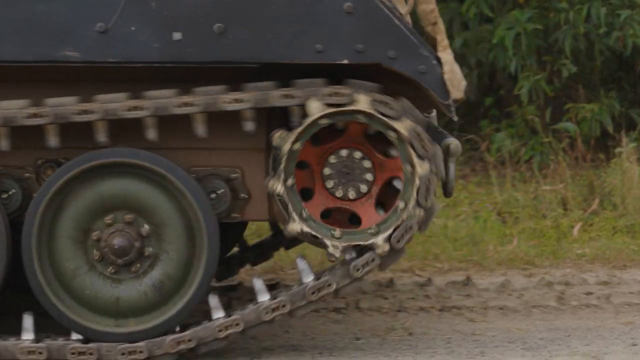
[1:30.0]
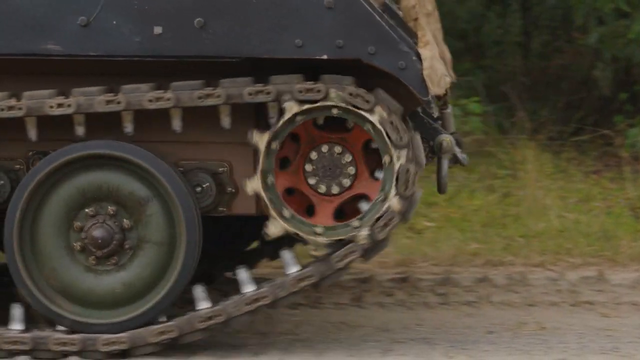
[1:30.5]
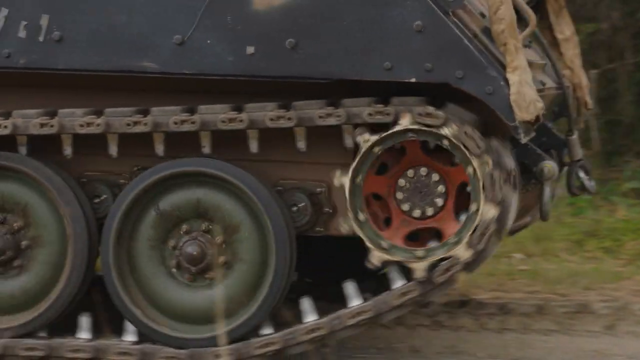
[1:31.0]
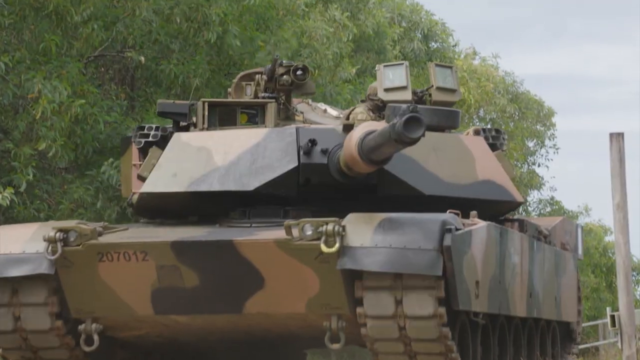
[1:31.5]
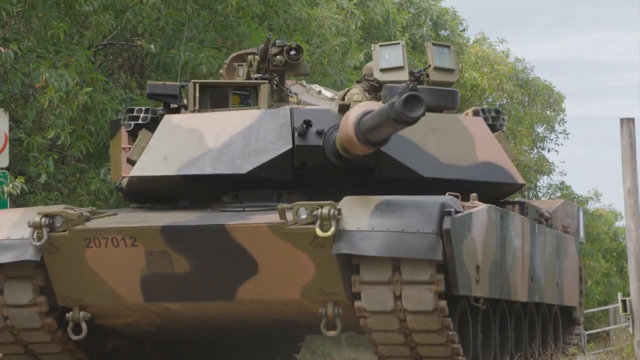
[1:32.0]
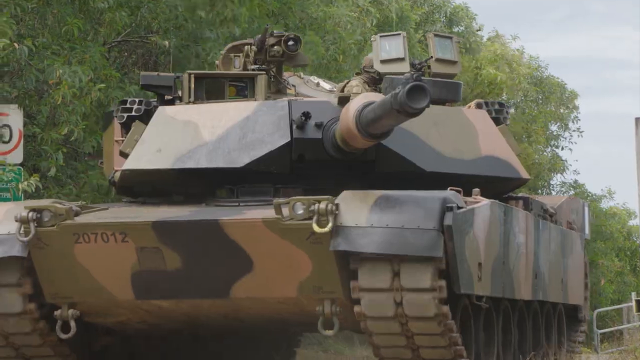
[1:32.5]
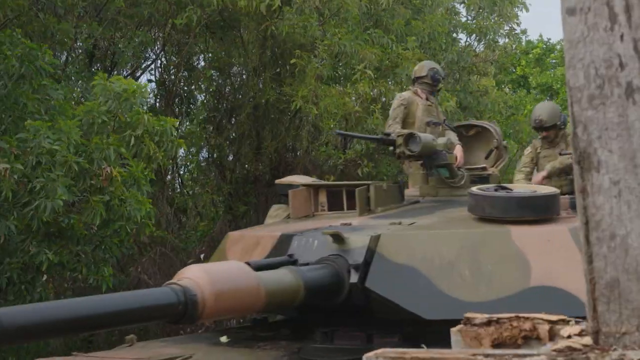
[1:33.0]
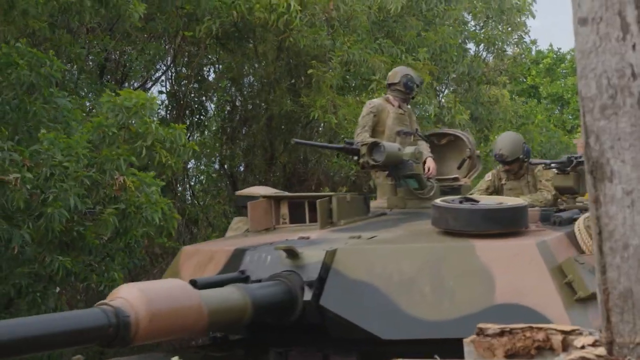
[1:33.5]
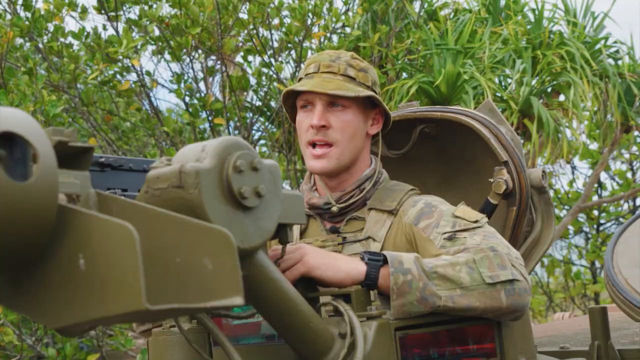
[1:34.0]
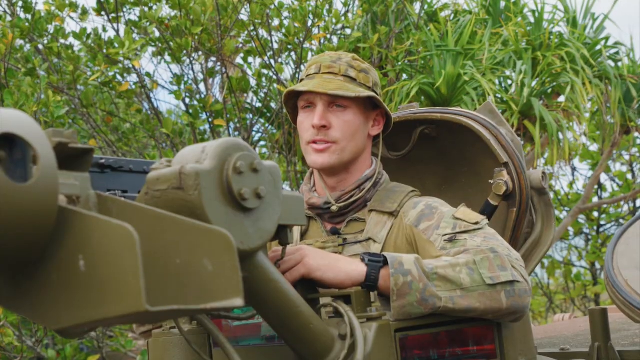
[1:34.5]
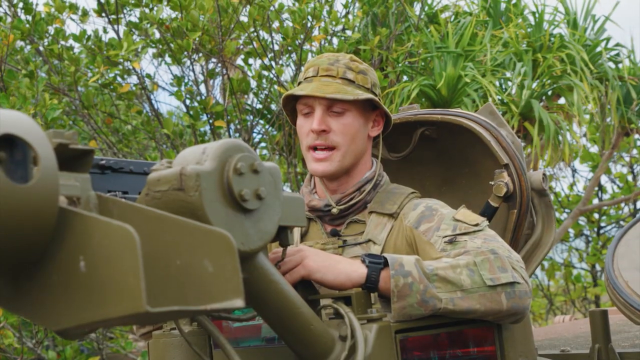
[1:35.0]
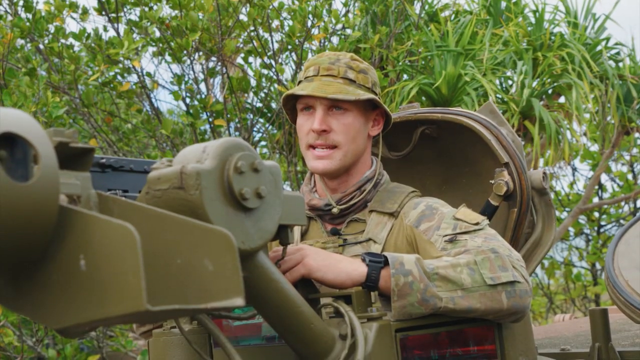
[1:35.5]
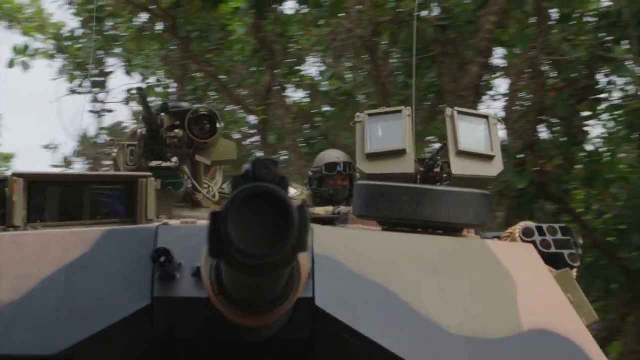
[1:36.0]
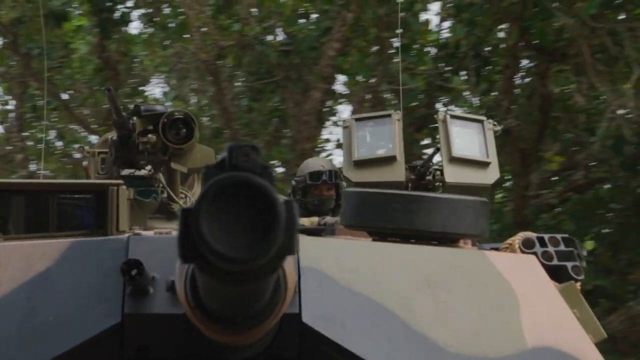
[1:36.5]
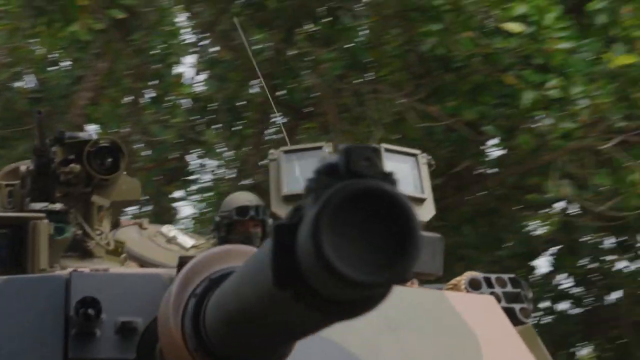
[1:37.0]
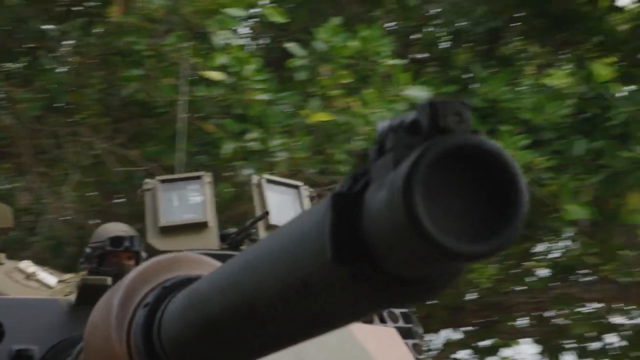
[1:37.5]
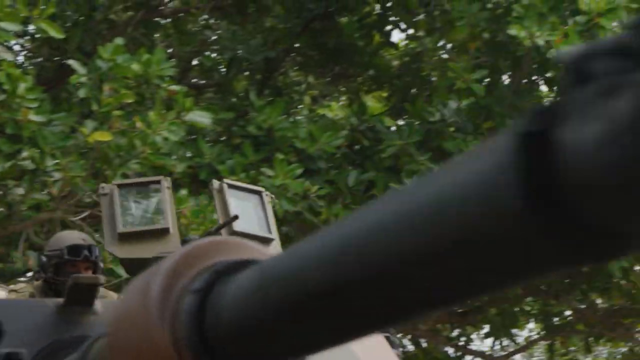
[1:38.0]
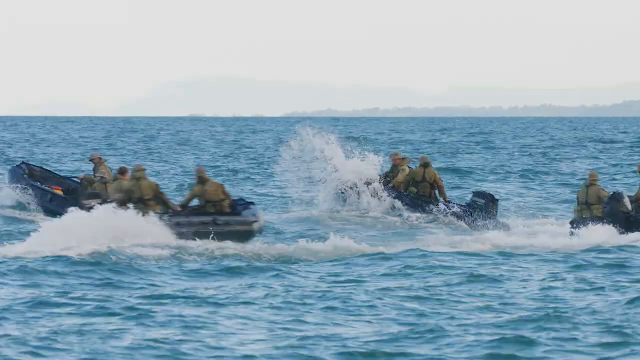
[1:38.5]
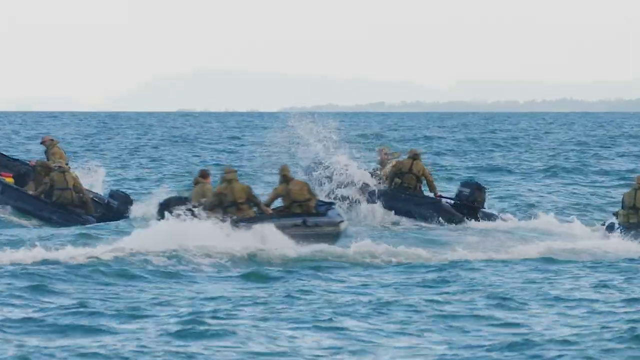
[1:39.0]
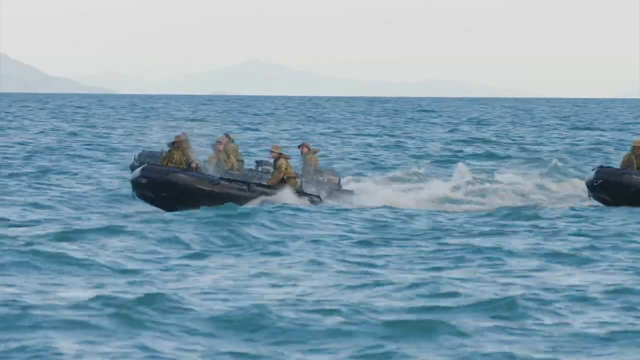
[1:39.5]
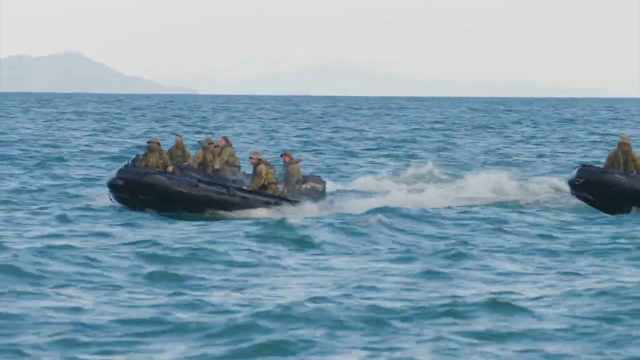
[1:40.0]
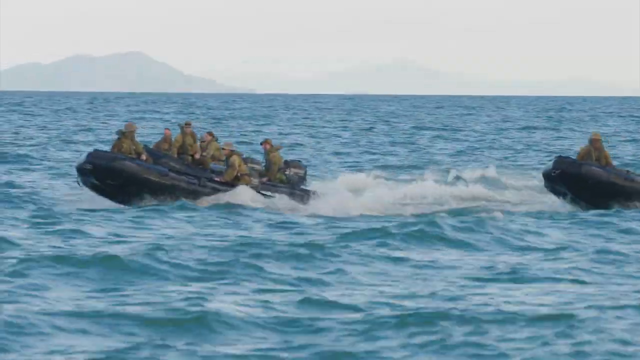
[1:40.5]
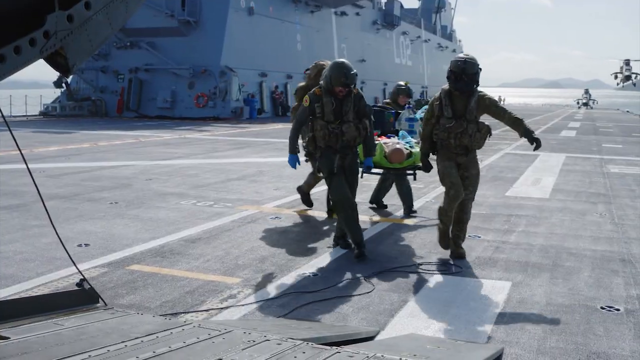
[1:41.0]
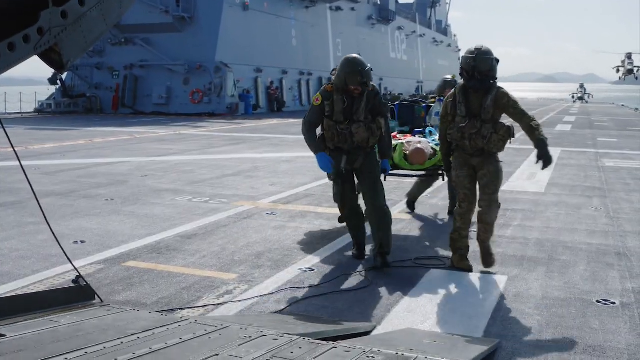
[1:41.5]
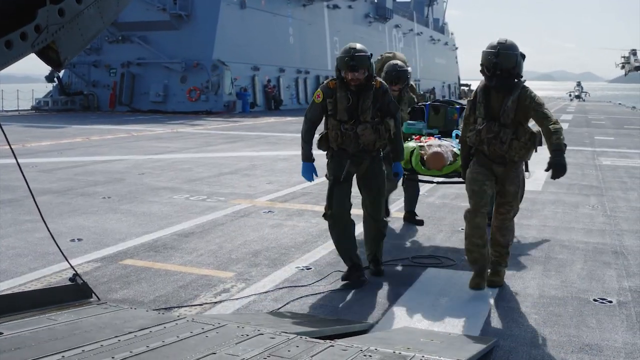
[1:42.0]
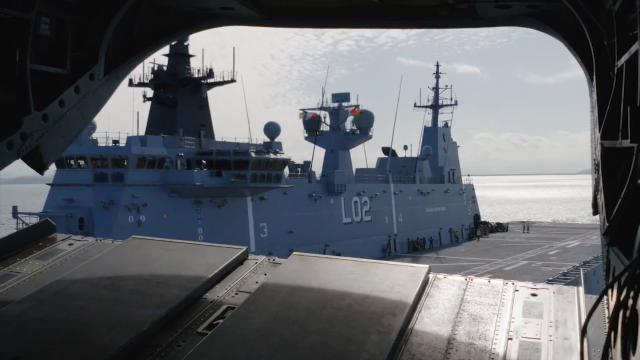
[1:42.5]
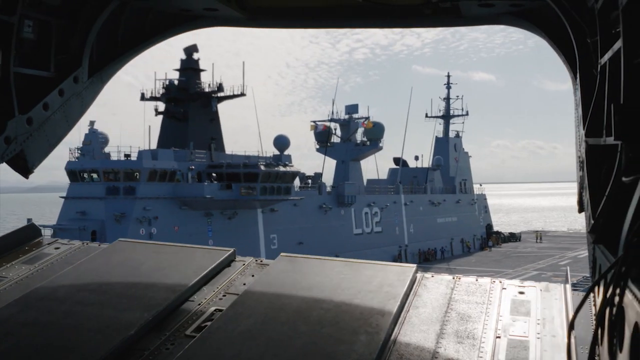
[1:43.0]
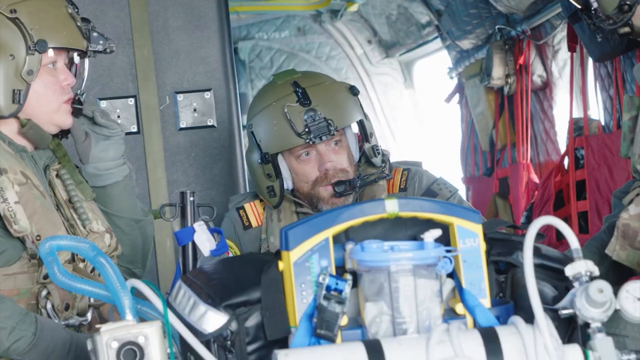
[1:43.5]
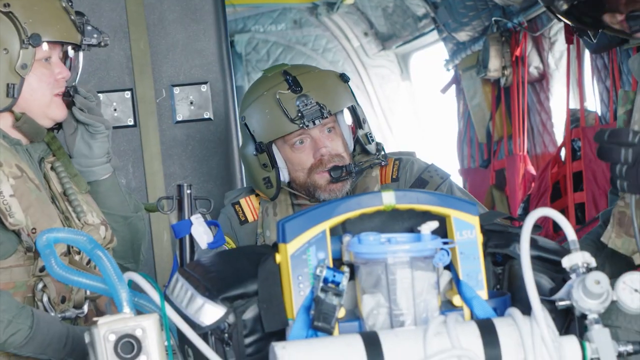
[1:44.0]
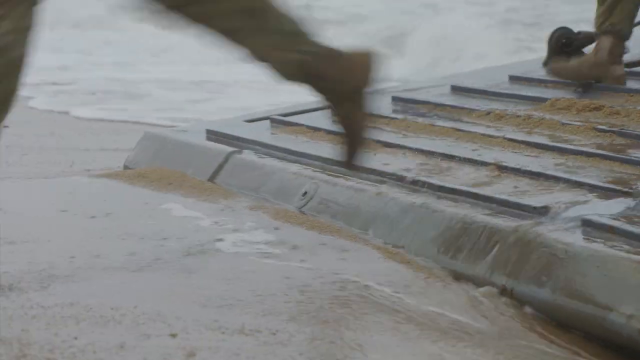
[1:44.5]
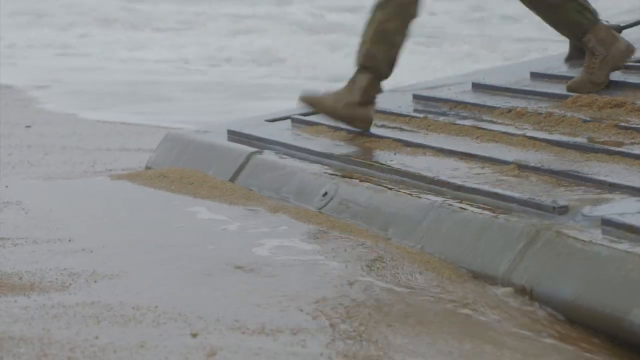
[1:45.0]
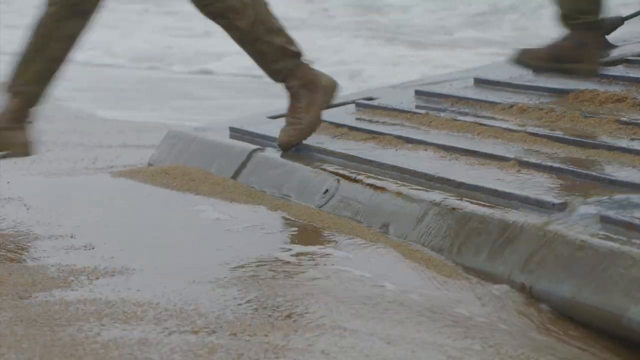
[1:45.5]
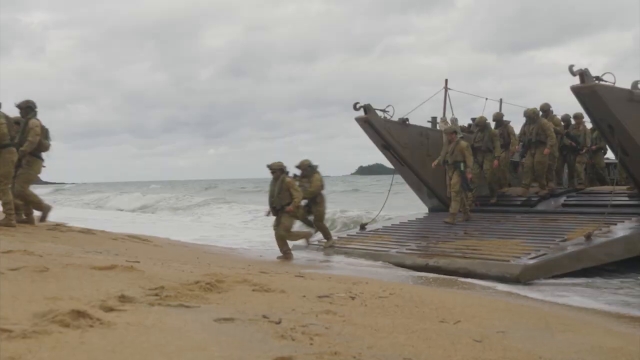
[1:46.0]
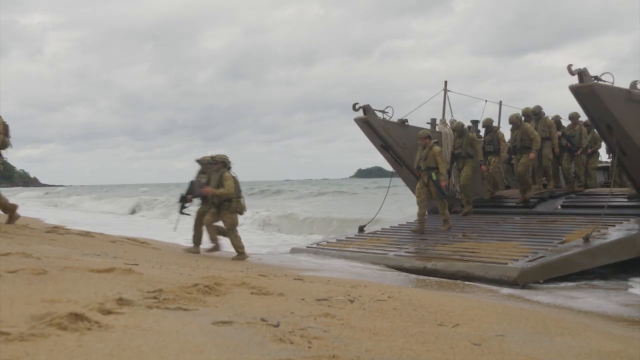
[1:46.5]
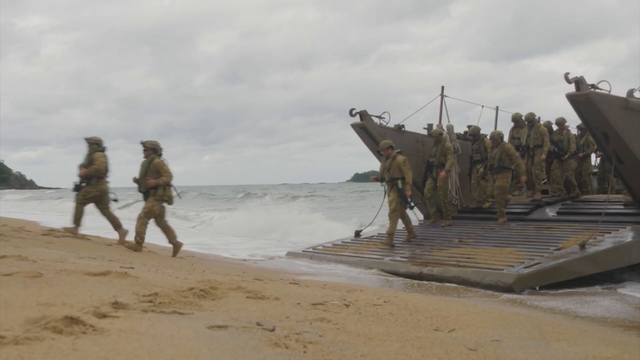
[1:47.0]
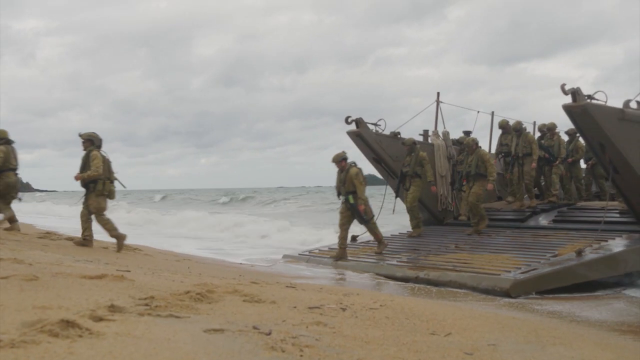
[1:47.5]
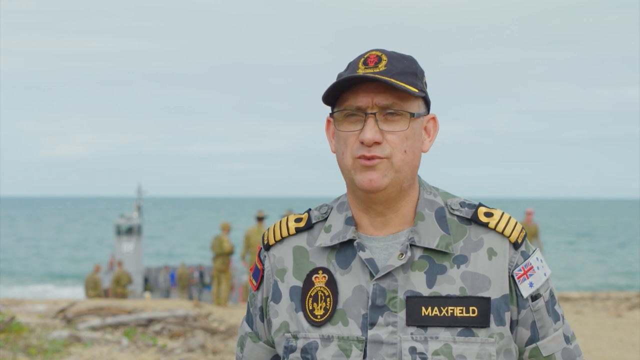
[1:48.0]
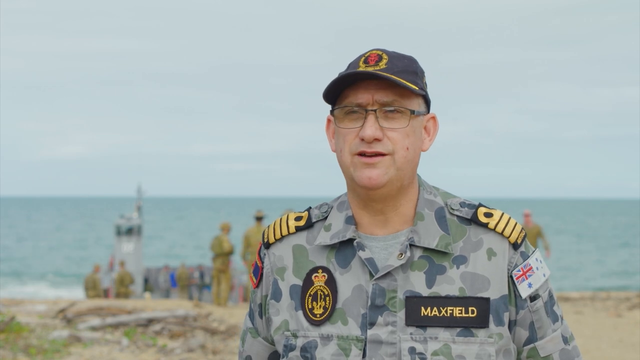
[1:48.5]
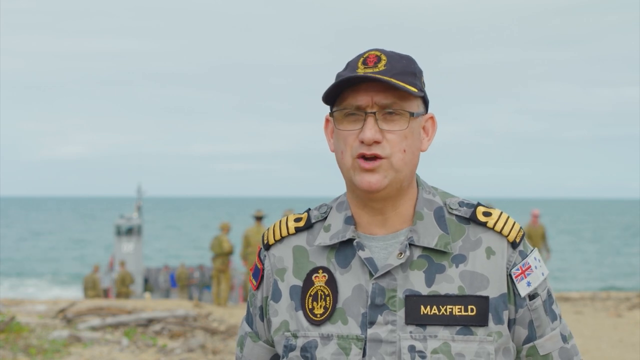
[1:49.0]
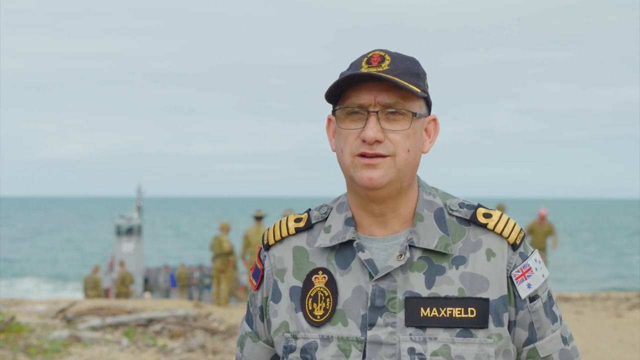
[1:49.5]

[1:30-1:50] The wheels of a tank are shown, two visible at the start, as the tank moves from left to right across the screen. Army personnel are in the tank, one controlling an assault weapon while the other just stands. An officer sitting in the tank wears a black watch on his left hand, an army uniform with an army vest and a bucket hat, and looks down as he speaks. A close-up of the tank follows, with two army personnel in the background. What looks like an army exercise on water shows four boats with multiple army personnel in them, moving up and down in the water. Four army personnel carry an individual on a stretcher. A ship is then filmed from the back of a helicopter. Two army personnel with helmets are in what looks like a medical helicopter, with an individual on the table, and they are speaking. Multiple army personnel then jump off the ship onto the shore.